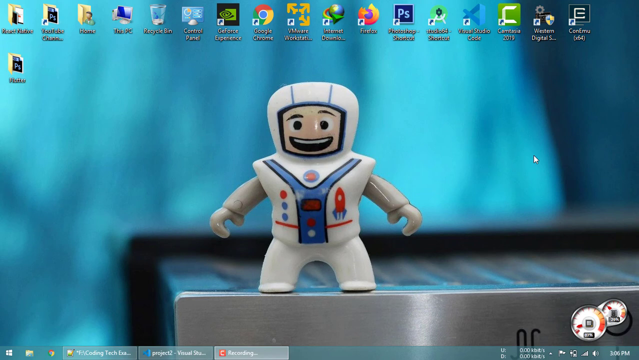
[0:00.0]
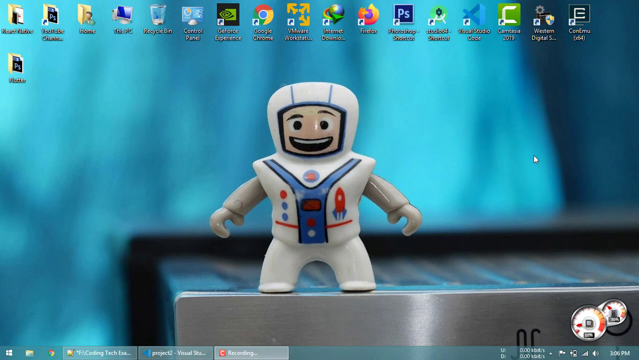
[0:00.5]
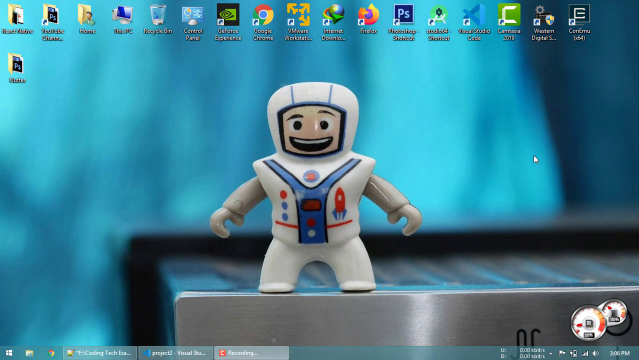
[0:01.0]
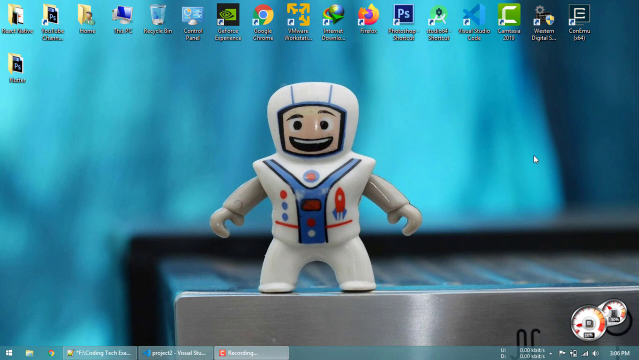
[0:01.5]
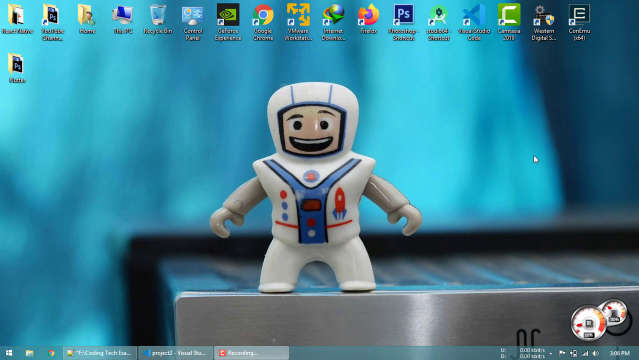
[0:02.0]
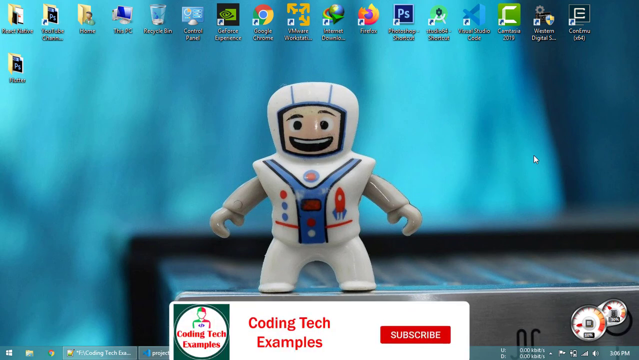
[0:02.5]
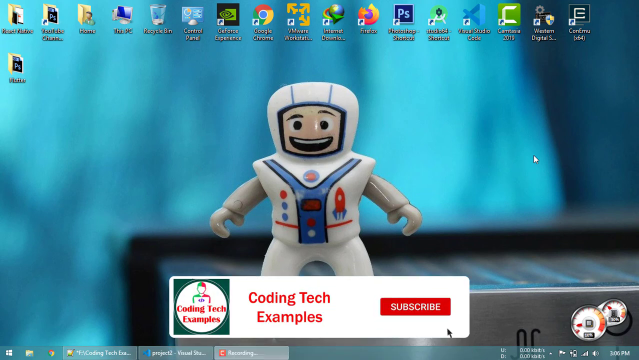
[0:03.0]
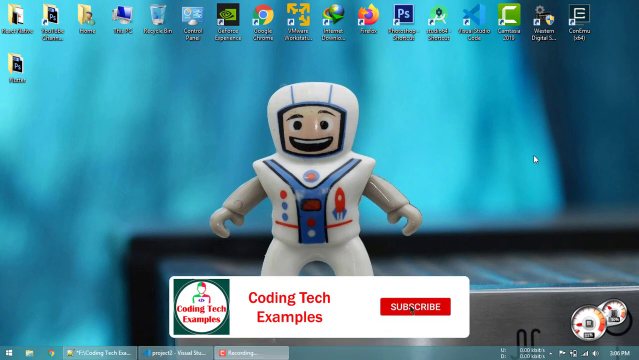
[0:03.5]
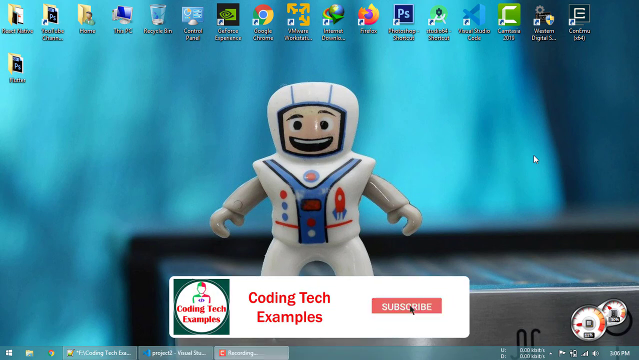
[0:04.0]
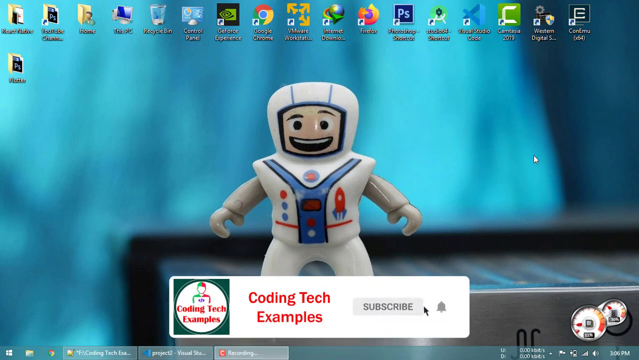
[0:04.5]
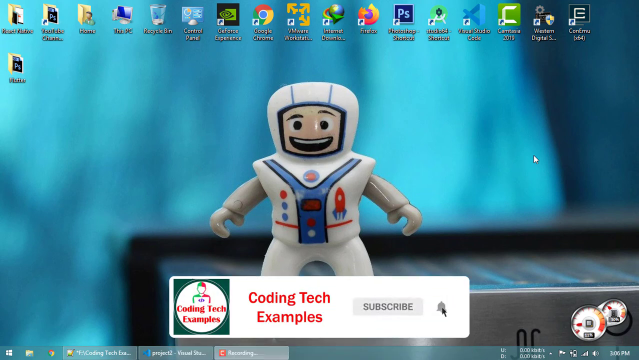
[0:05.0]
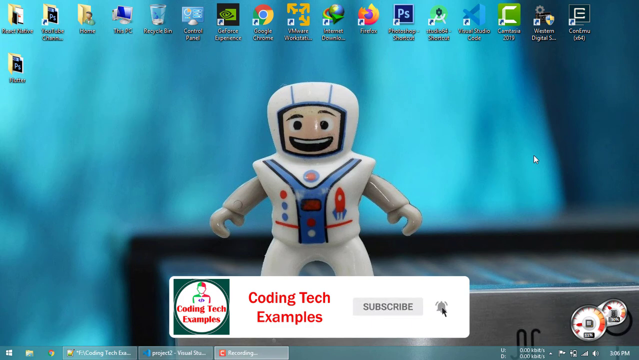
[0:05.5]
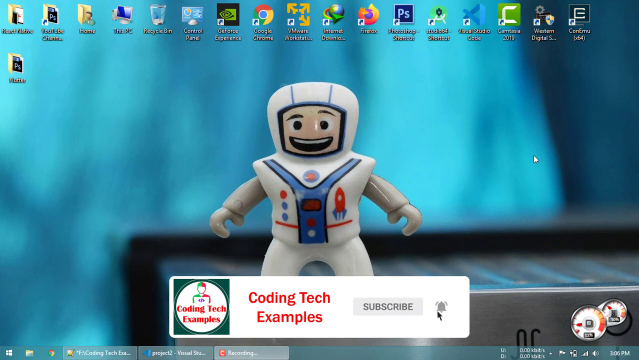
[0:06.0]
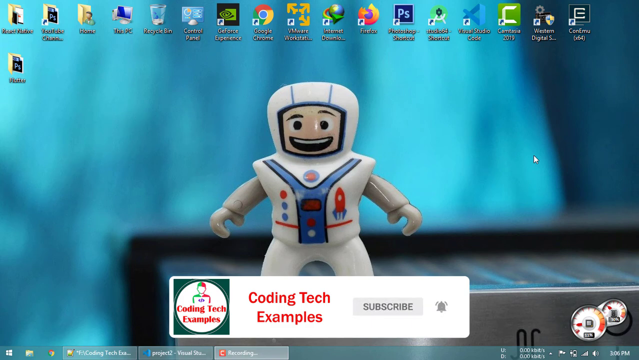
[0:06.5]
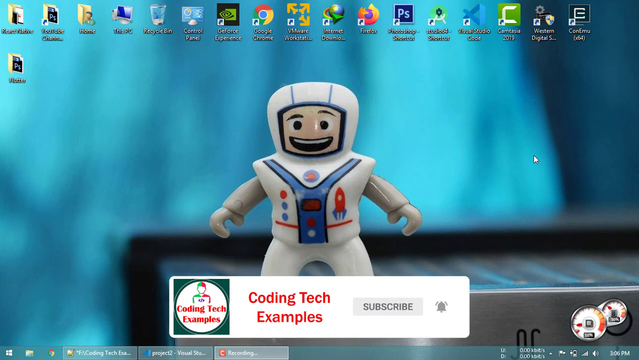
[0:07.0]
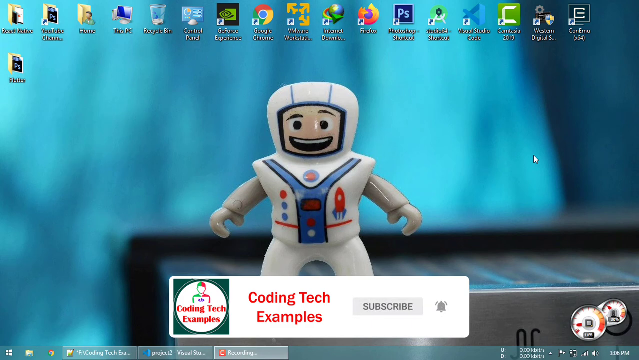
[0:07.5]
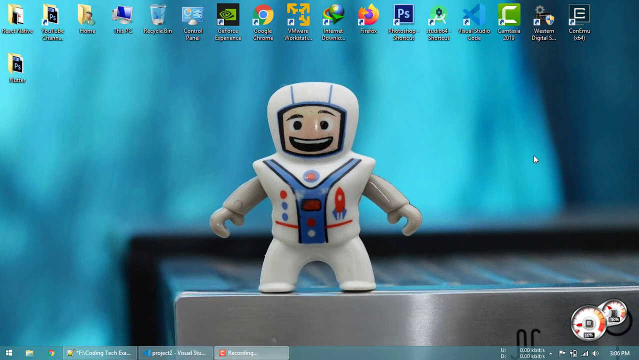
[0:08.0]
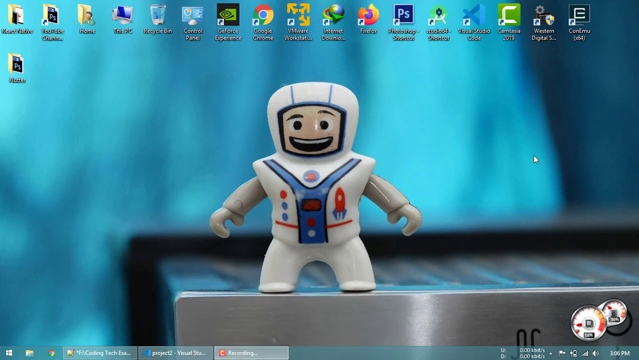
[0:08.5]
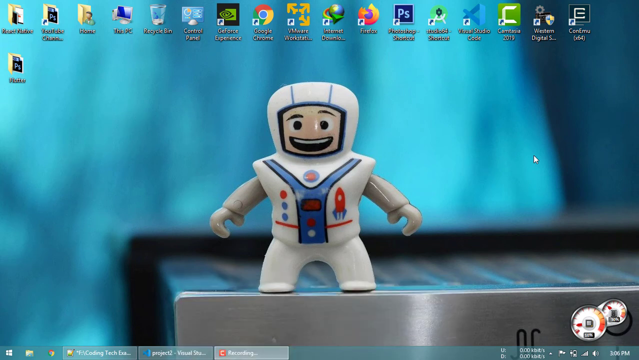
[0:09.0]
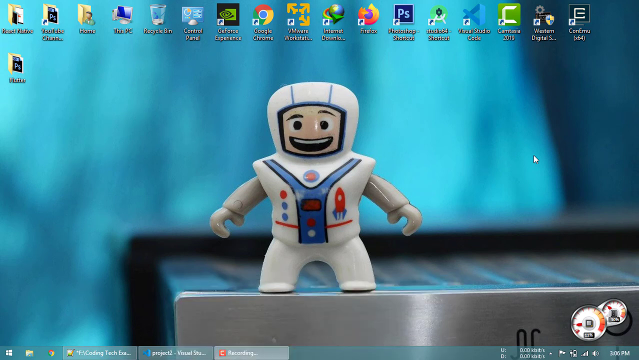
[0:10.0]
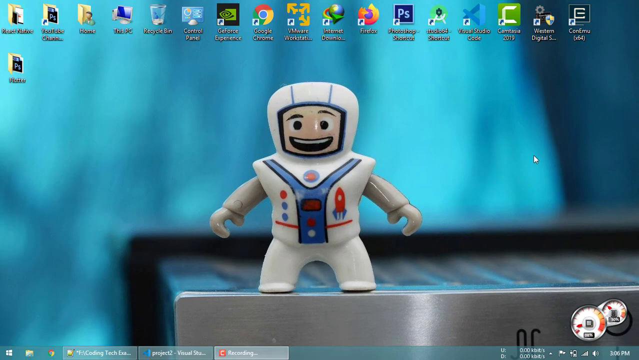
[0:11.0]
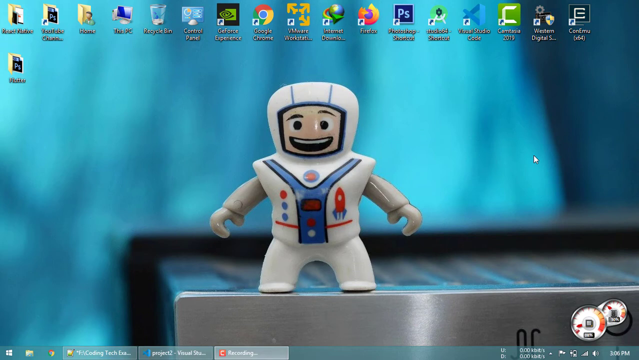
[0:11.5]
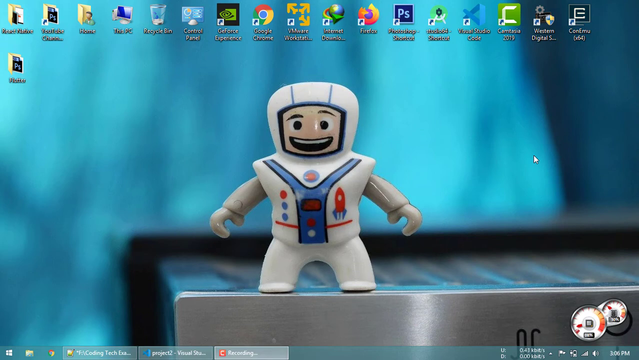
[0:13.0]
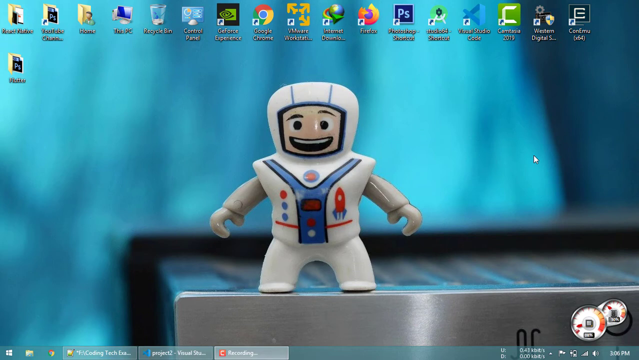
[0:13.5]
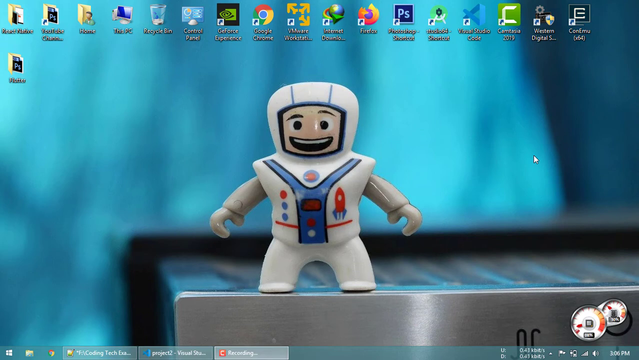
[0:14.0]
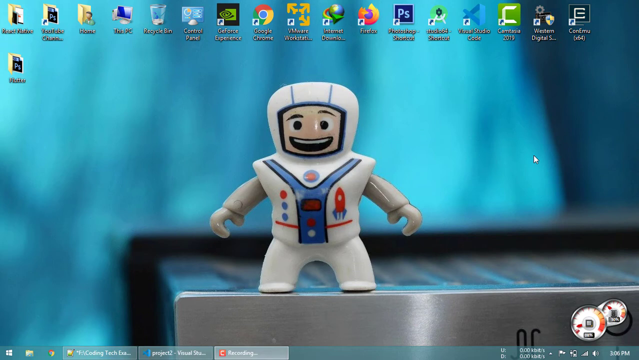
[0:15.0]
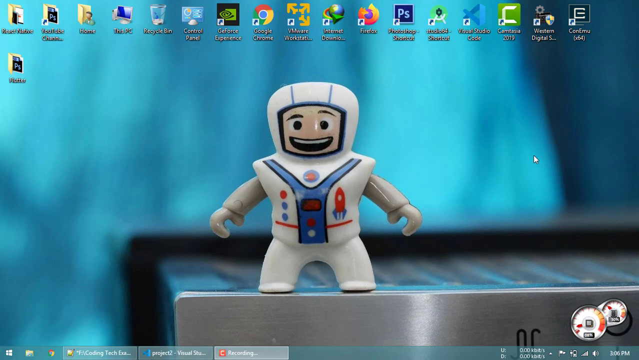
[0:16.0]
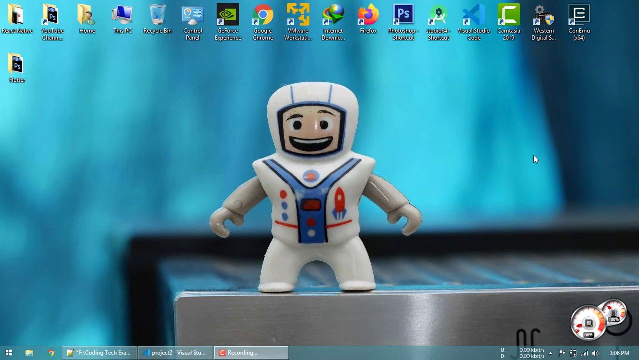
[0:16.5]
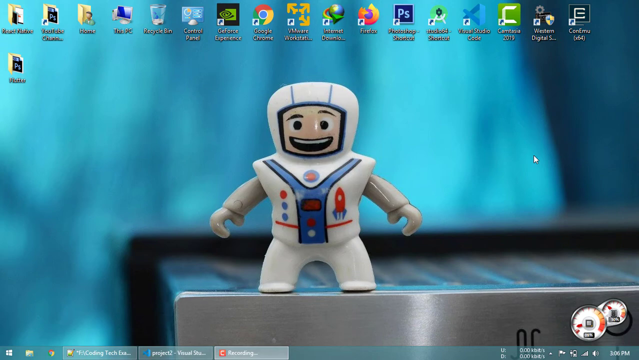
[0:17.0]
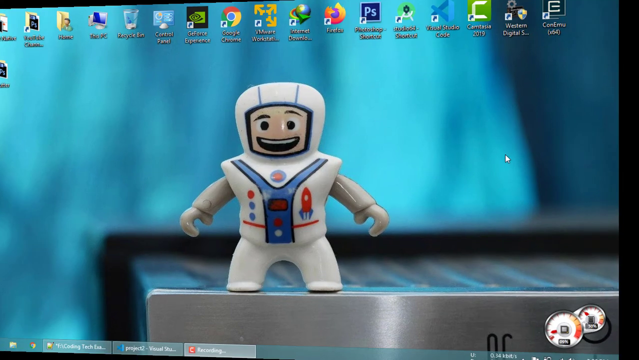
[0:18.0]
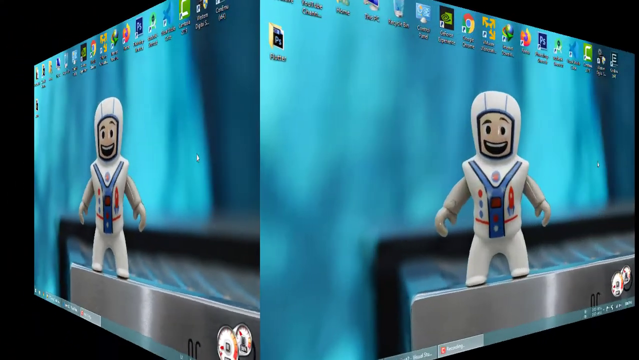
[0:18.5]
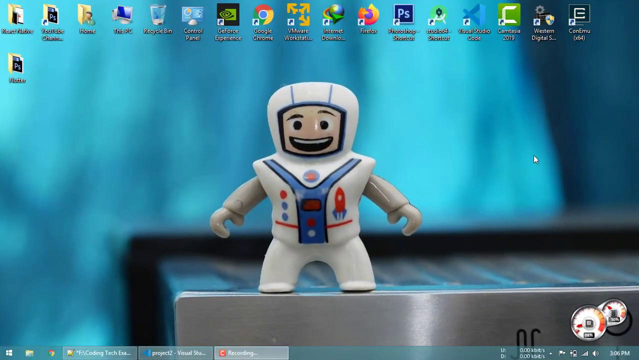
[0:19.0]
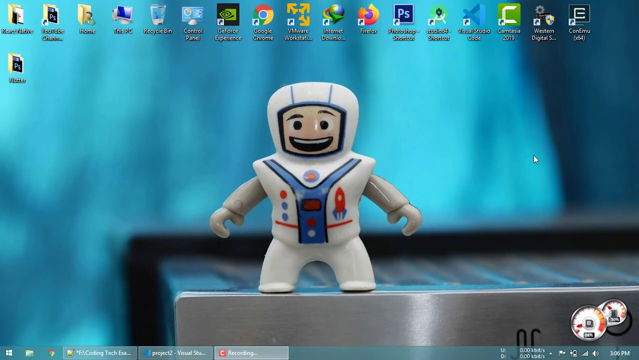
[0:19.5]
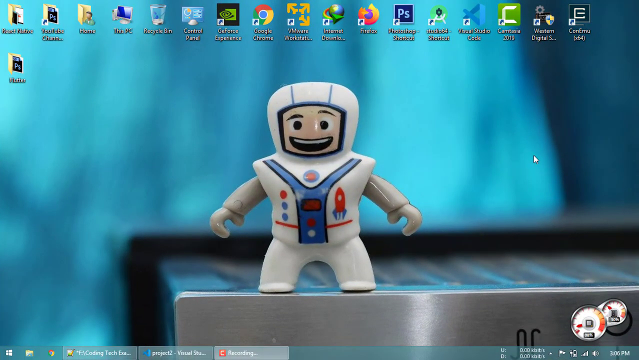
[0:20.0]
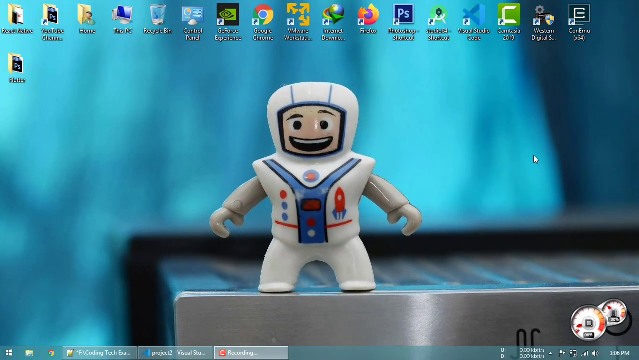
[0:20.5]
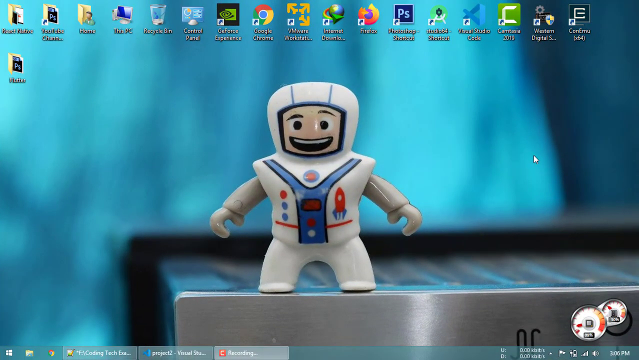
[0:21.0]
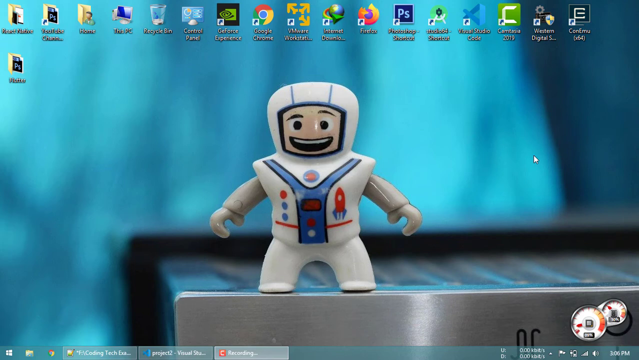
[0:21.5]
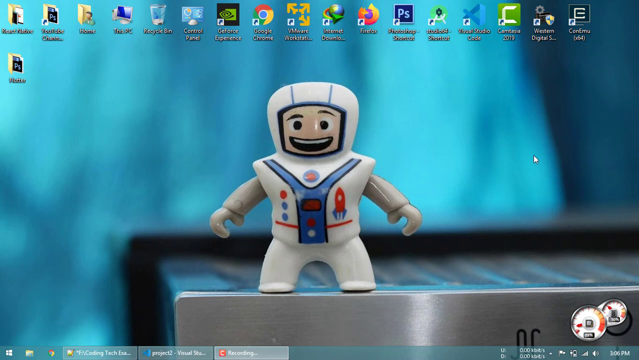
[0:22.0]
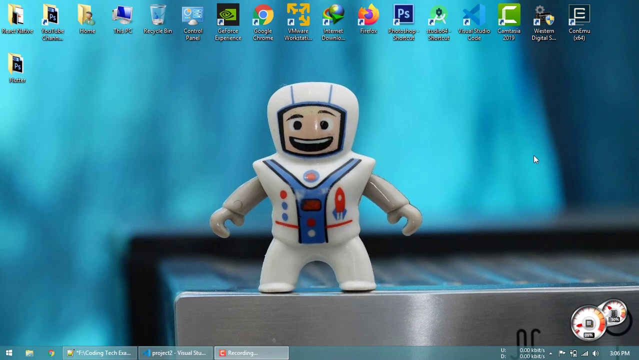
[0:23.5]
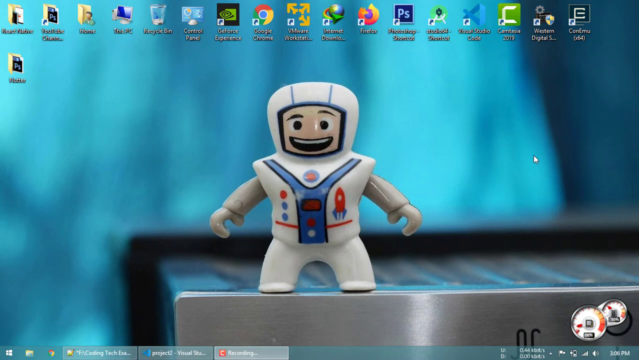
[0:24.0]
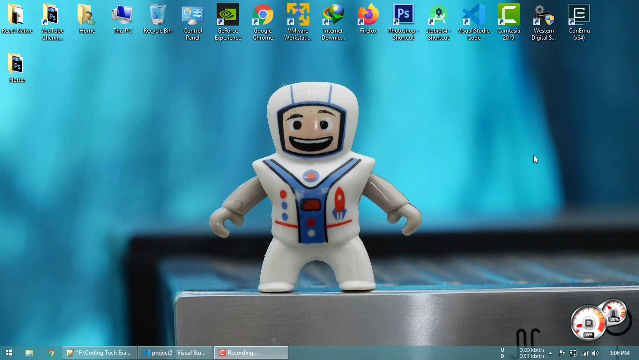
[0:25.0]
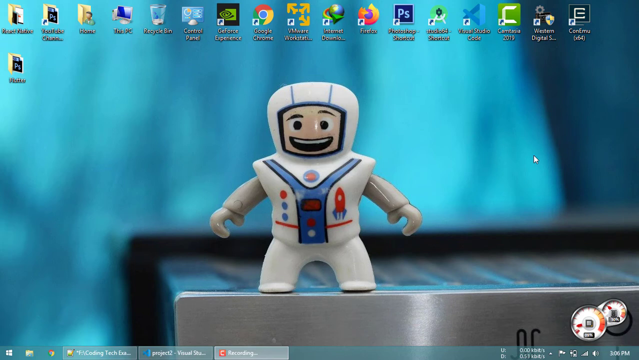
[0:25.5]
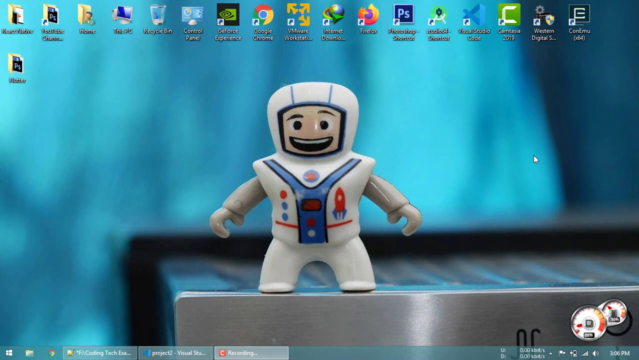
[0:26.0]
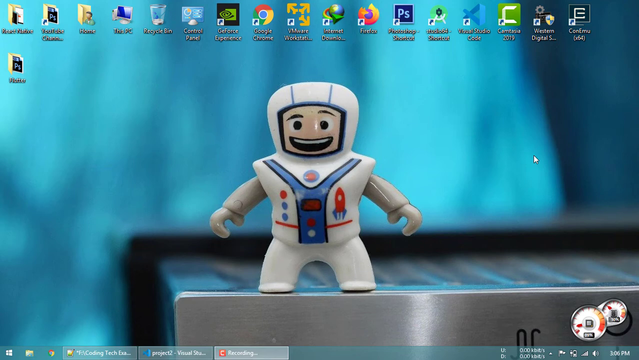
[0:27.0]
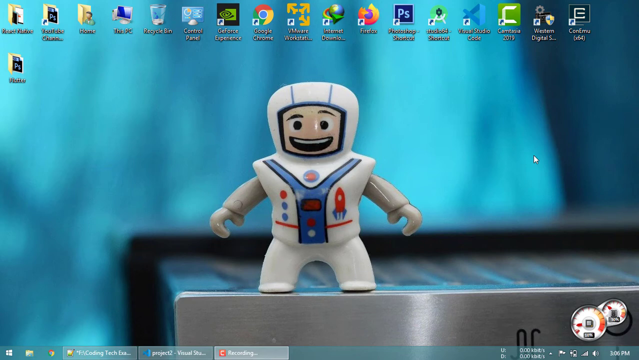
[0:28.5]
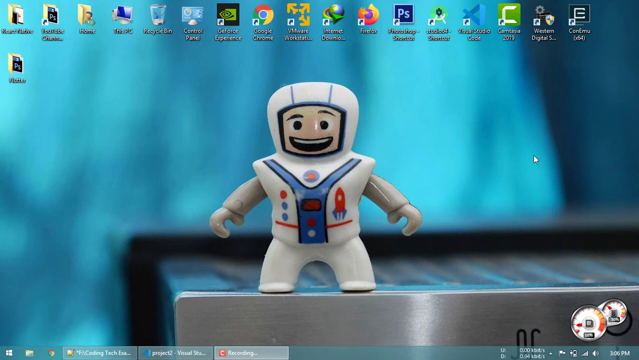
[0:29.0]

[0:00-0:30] A PC desktop has many folder icons on the screen over a wallpaper of an animated toy ninja wearing white and blue clothes. The icons include This PC, the recycling bin, the control panel, Google Chrome, Firefox, video studio, code and a home folder, along with one with a PS logo and one with the letter C; there are 18 of them. The icon for the computer is labeled "This PC". The time is shown in the lower right corner. After a few seconds the wallpaper rotates in a three-dimensional shape to show a statement about coding examples, along with a YouTube subscribe logo with subscribe and follow buttons. Down on the taskbar there are a home icon, Chrome and a recording icon, suggesting the picture may have been taken while recording.